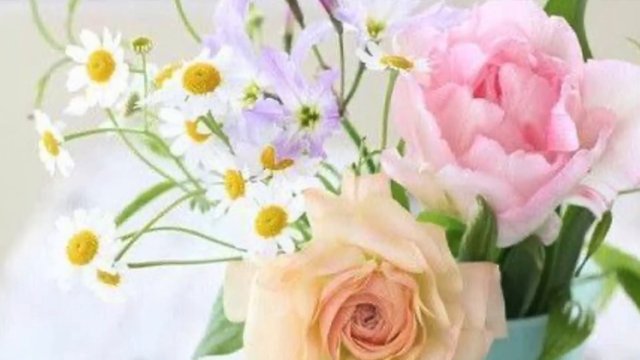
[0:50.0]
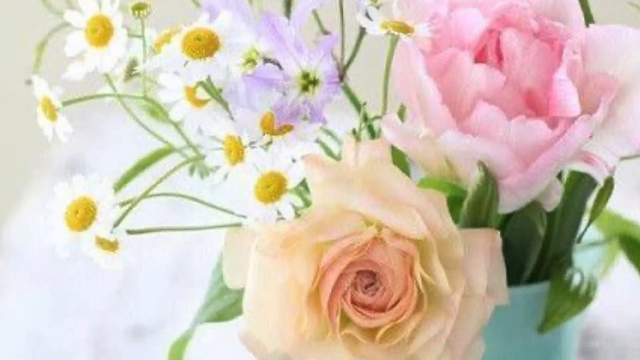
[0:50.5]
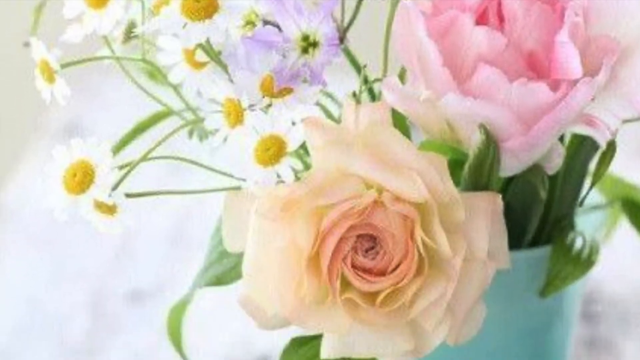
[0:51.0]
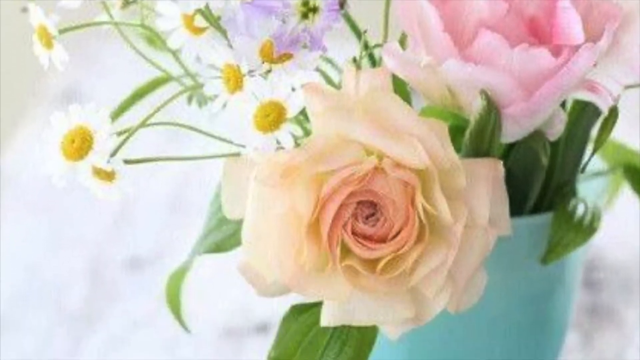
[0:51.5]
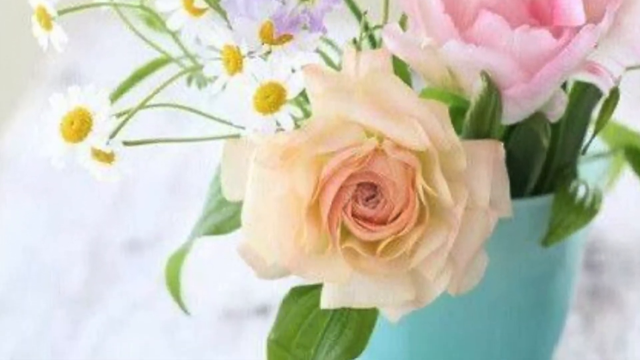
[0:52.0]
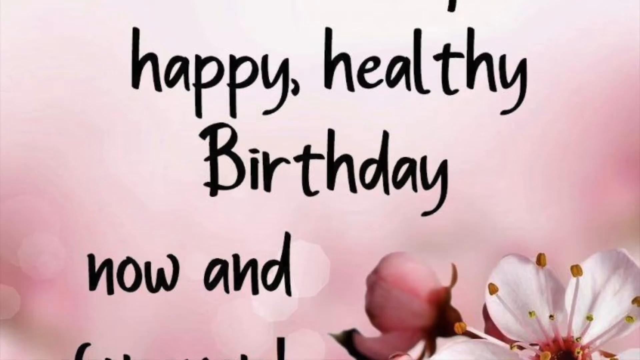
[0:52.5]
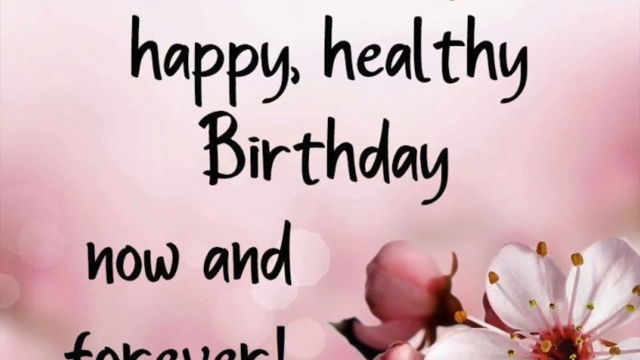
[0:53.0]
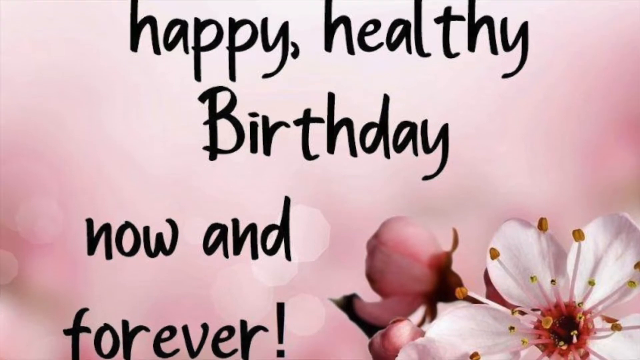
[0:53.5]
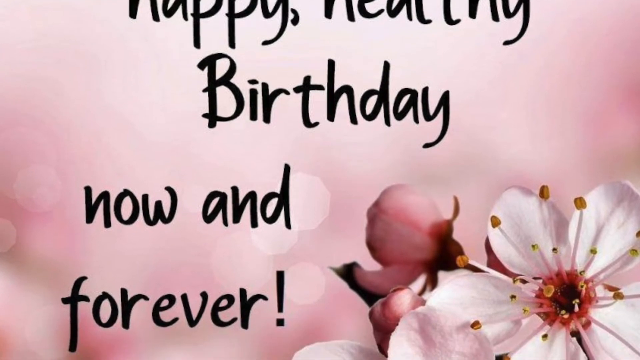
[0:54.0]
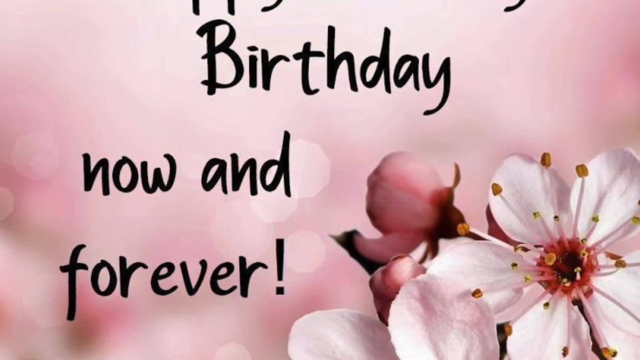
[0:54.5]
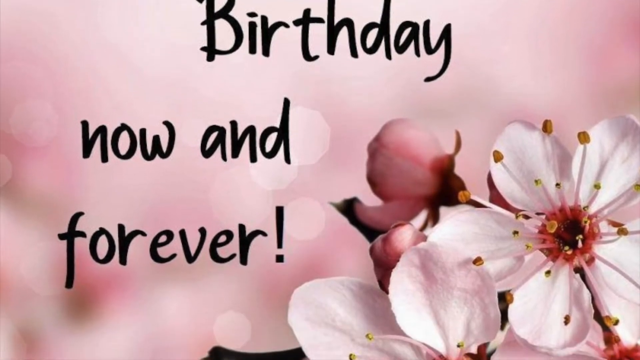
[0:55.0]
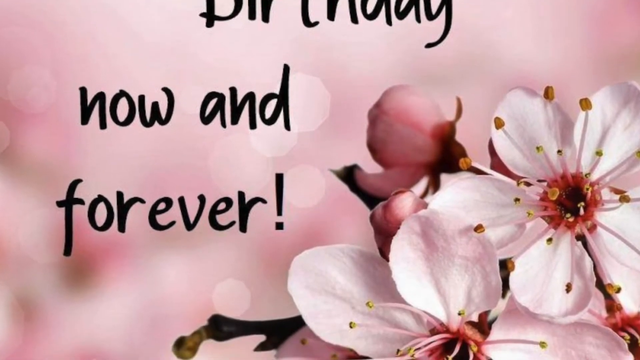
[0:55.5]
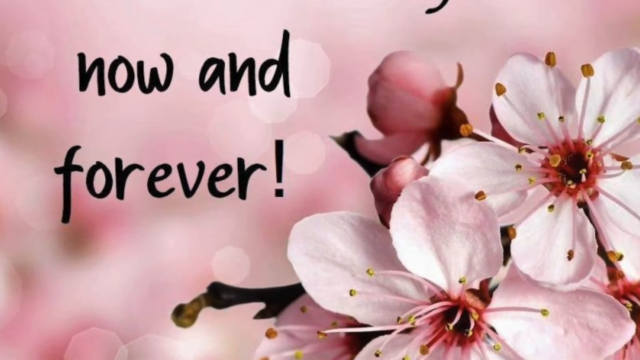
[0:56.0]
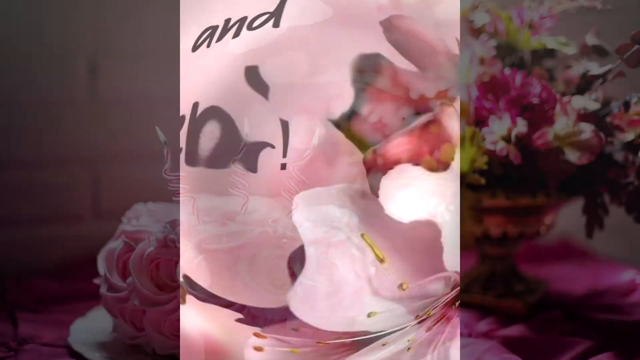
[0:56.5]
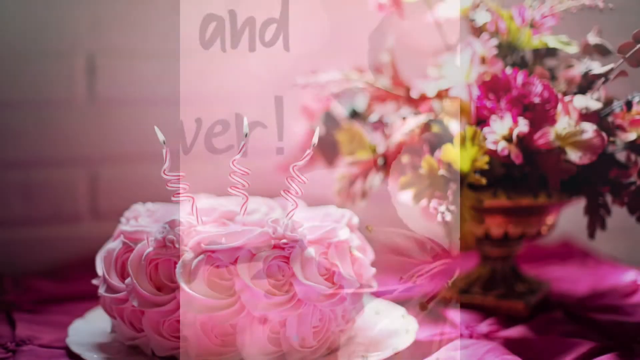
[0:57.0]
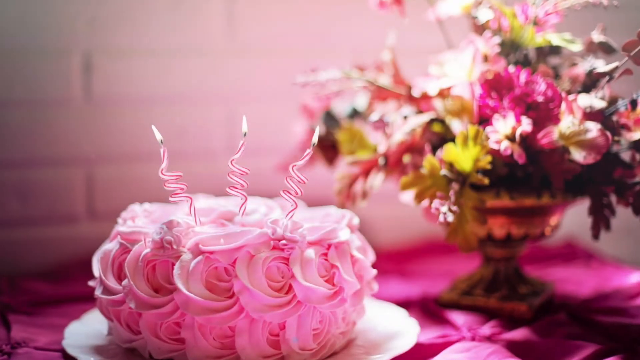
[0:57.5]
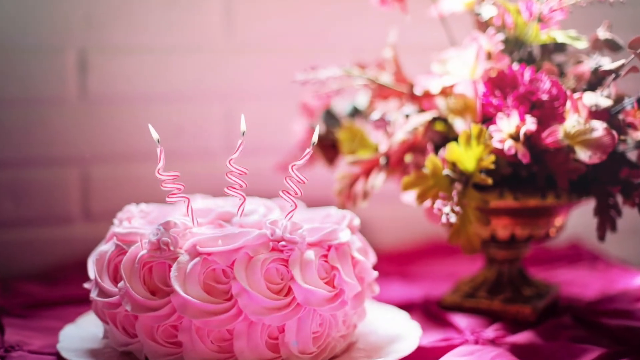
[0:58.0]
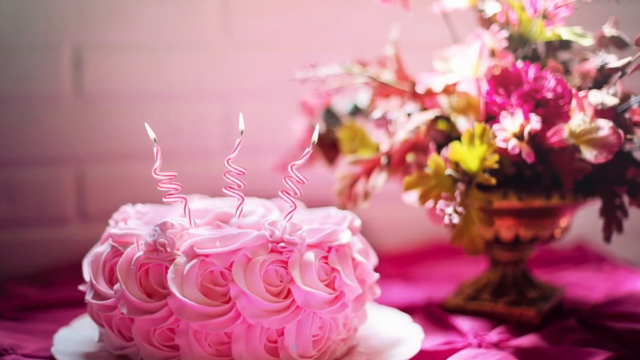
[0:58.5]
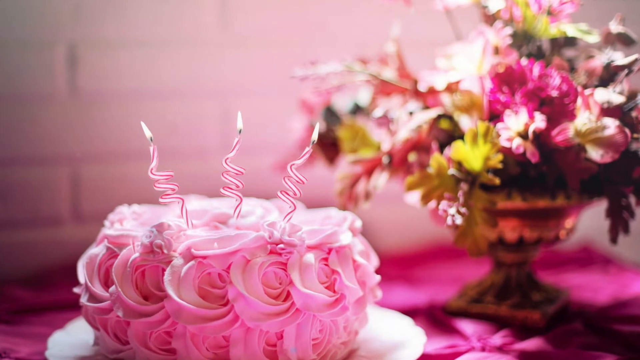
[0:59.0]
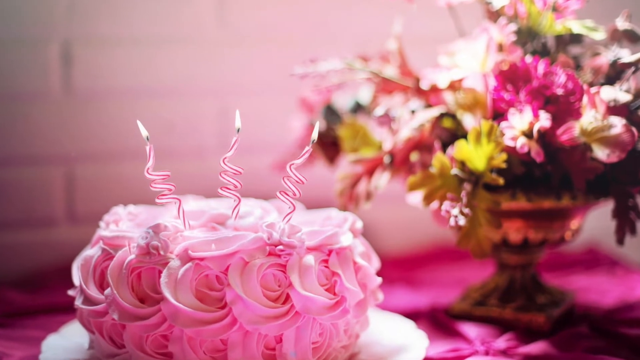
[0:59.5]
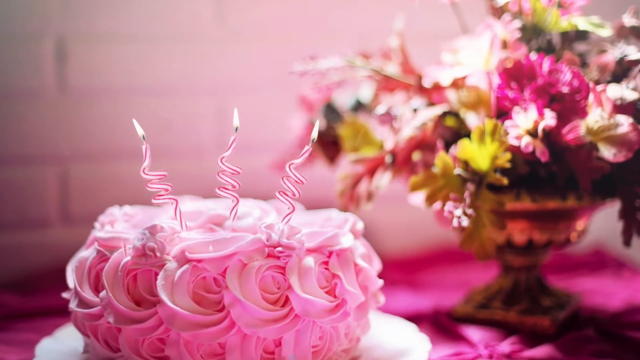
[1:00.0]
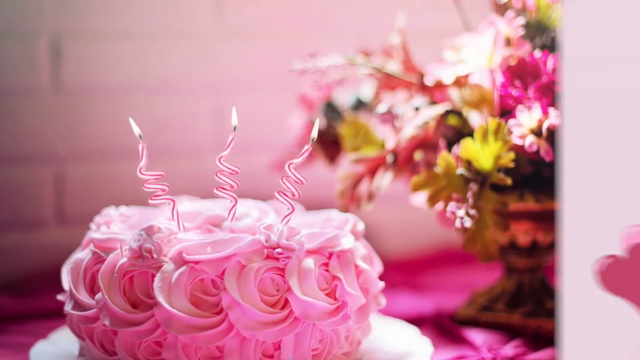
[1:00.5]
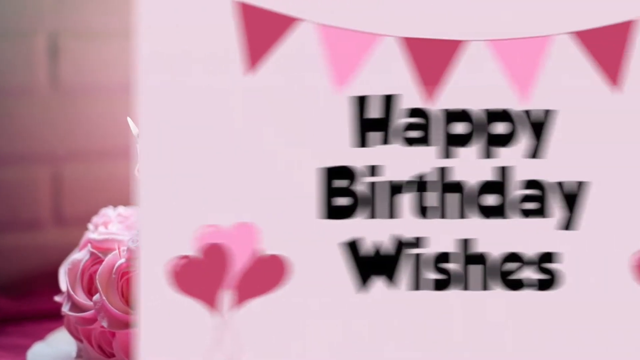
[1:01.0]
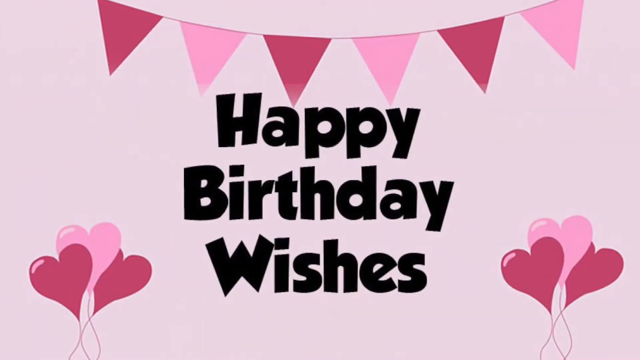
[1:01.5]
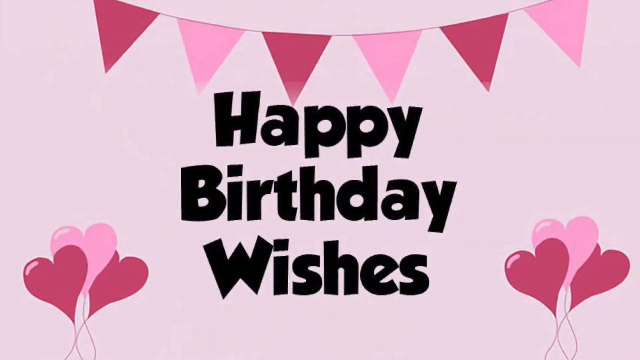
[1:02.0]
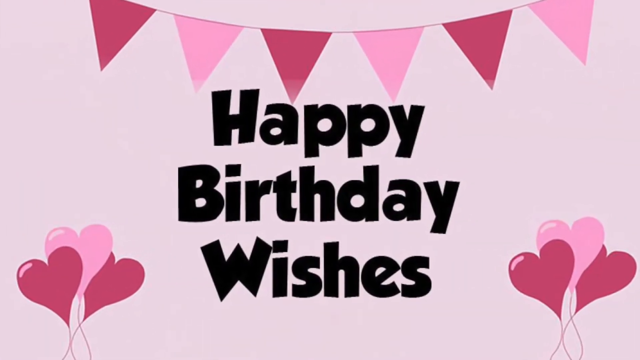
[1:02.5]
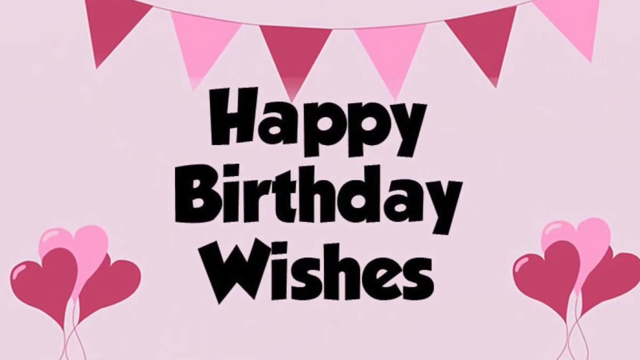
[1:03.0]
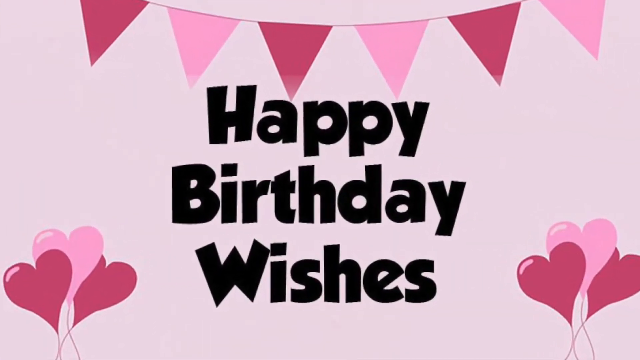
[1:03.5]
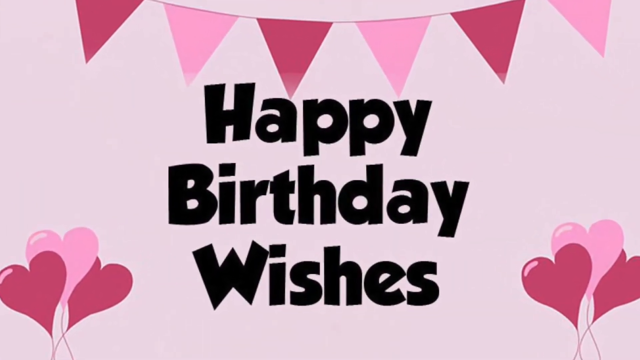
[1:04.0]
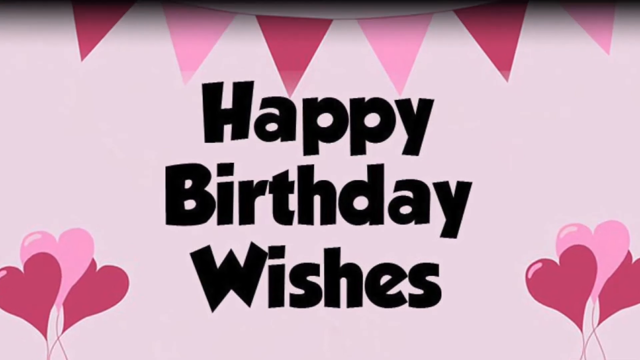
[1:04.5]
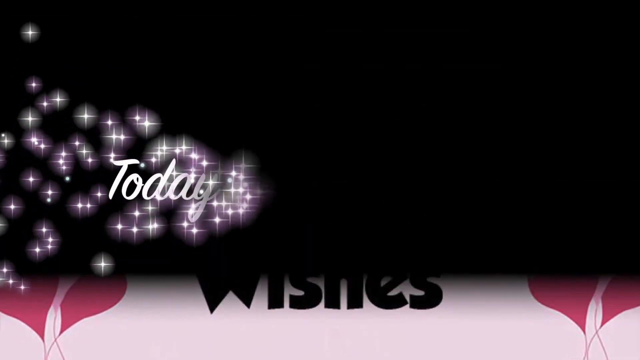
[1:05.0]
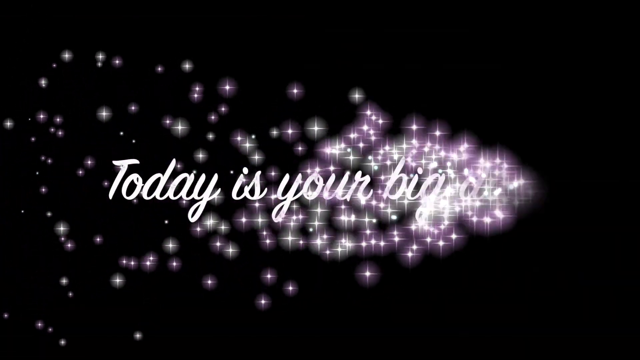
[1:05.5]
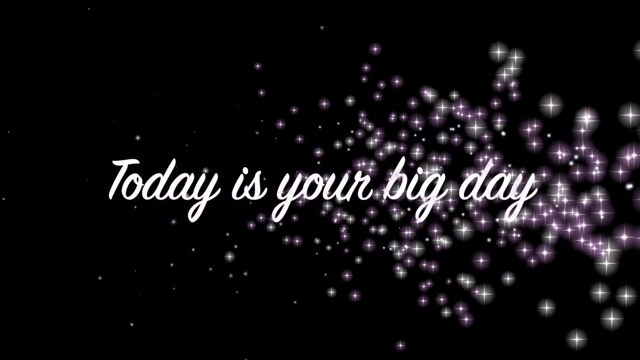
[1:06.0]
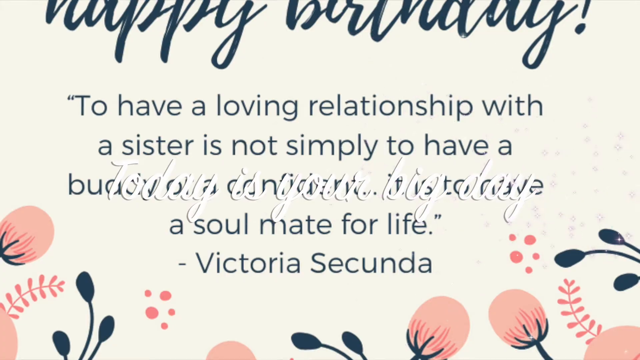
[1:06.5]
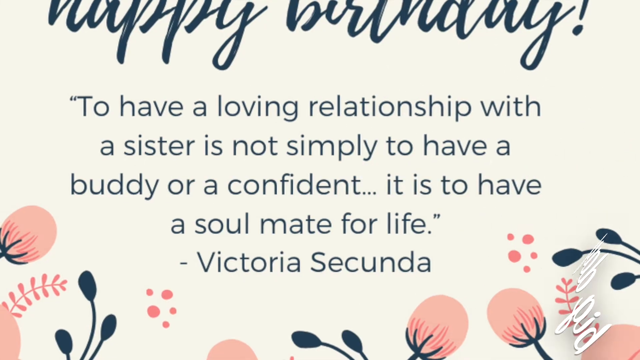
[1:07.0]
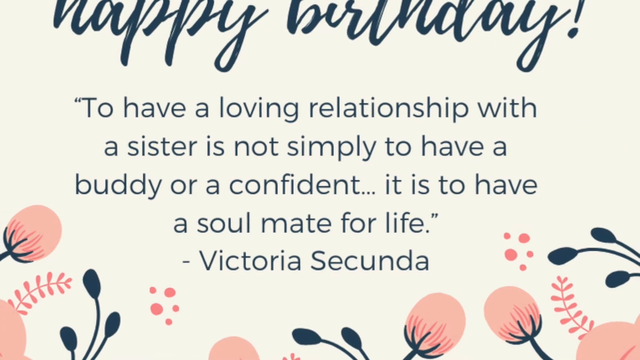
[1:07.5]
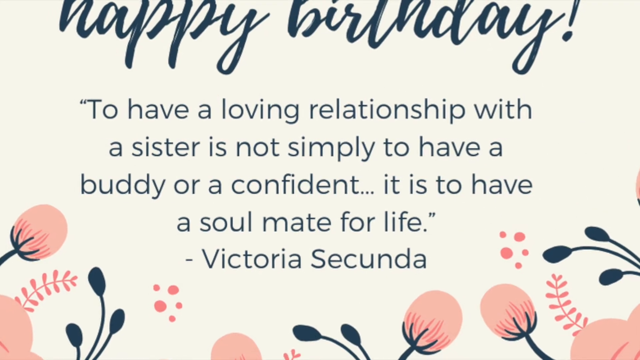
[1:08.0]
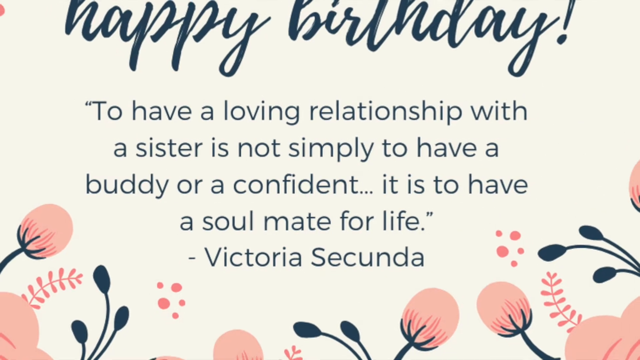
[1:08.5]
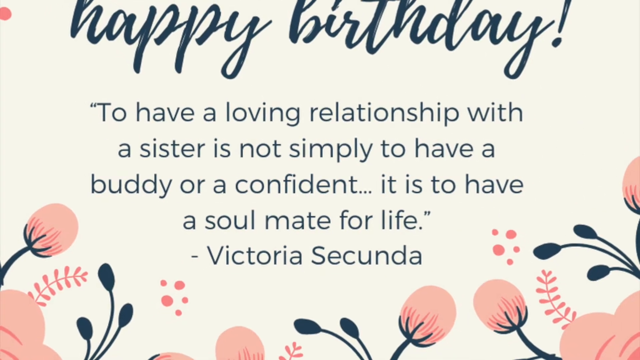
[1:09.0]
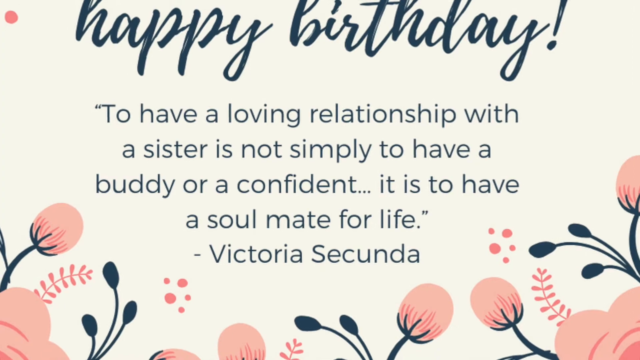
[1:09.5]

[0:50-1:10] A birthday card says "happy birthday" with flowers beneath it: dandelions or something similar on the left side of the frame, maybe a pink rose on the right side, and maybe an orange rose, half cut off, at the middle bottom. The picture sweeps up, then cuts to an entirely different card with black text on a pink background reading "happy healthy birthday." As it sweeps up, it reveals more flowers on the right side of the frame beside the text, a white flower and a pink flower. A ripple cut leads to another still image with flowers, possibly a cake with flowers, and a blurry flower arrangement of pink, yellow and white flowers in a vase behind it, with lit twisty candles on it; the blur makes it hard to tell exactly what is shown. Another card slides in, saying "happy birthday wishes" in black text, with stylized heart balloons, a stylized banner above, and a pinkish-white background. The sparkly effect then reveals "today's your big day" on a black background, and the video immediately cuts away to another card on which only the bottom half of "happy birthday" is visible. Beneath it is the text "to have a loving relationship with a sister is not simply to have a buddy or a confidant, it is to have a soulmate for life," a quote attributed to Victoria Secunda.